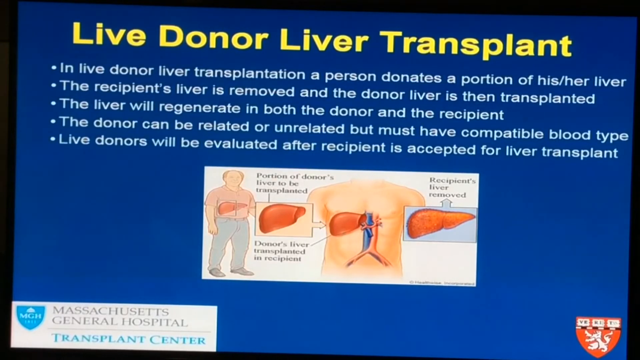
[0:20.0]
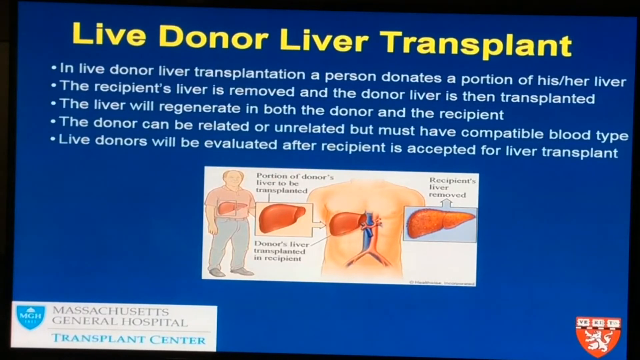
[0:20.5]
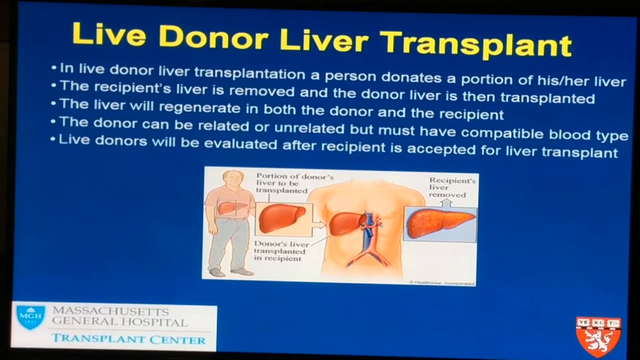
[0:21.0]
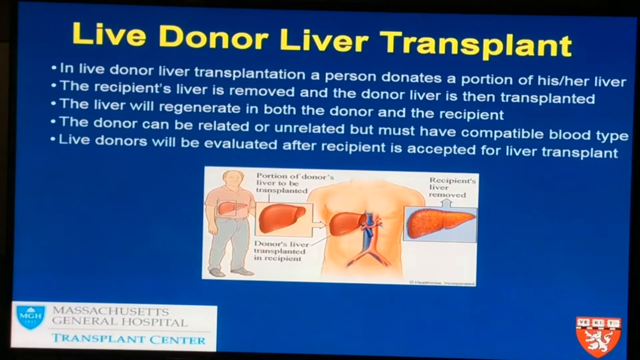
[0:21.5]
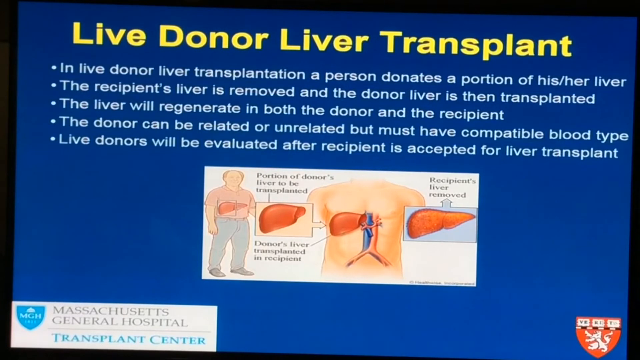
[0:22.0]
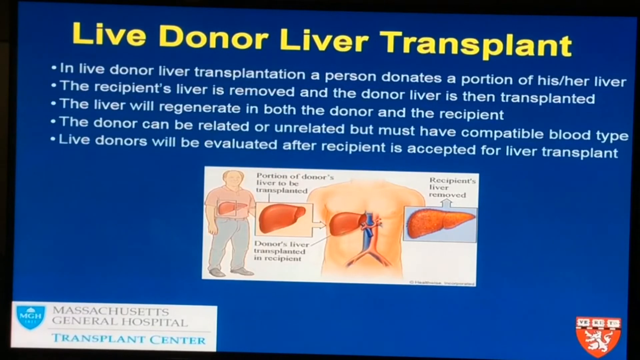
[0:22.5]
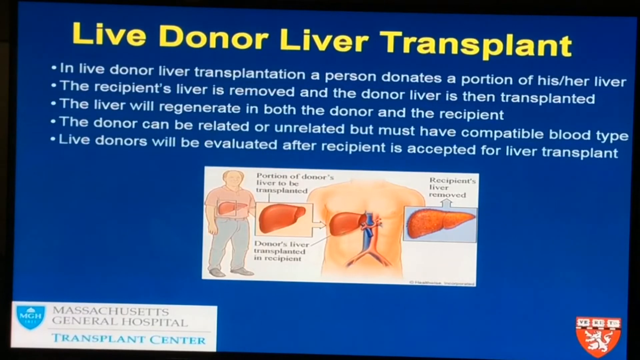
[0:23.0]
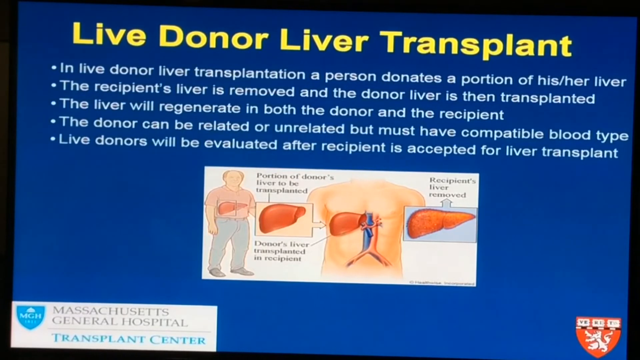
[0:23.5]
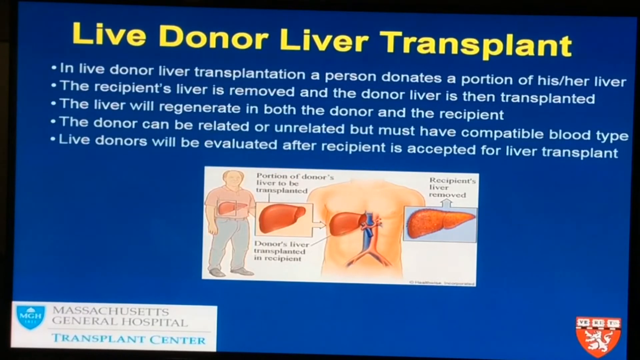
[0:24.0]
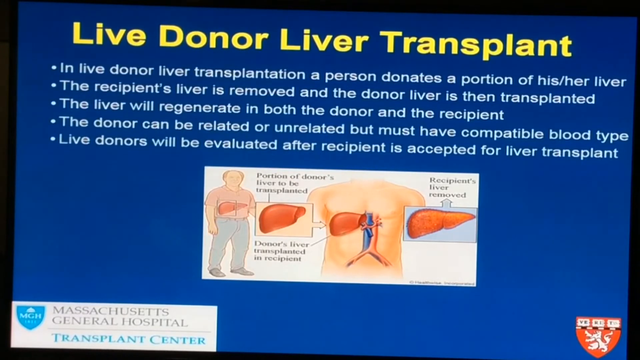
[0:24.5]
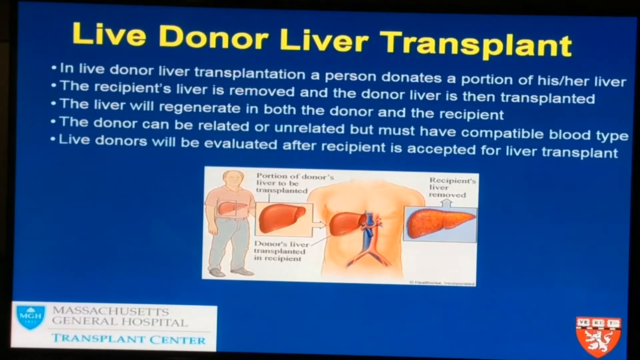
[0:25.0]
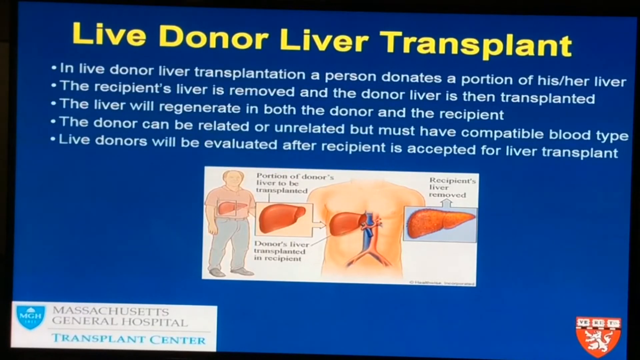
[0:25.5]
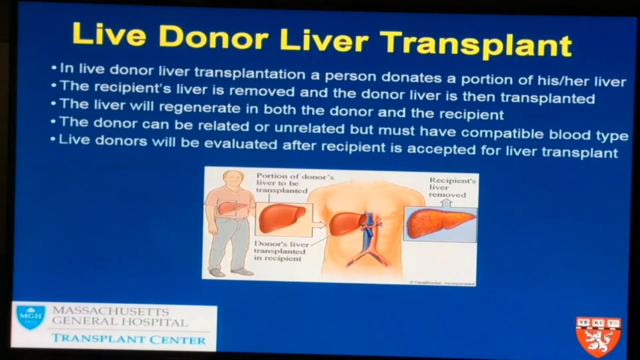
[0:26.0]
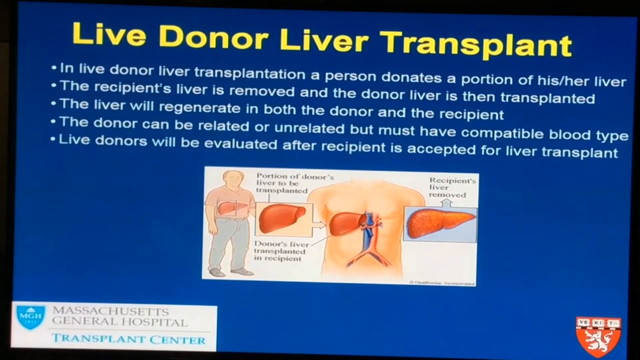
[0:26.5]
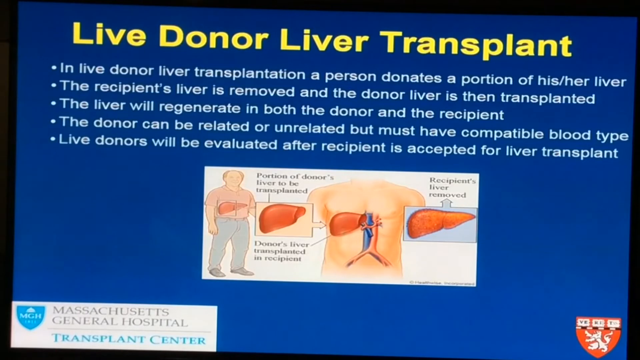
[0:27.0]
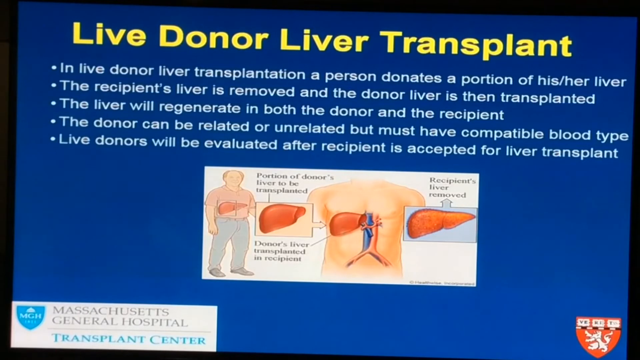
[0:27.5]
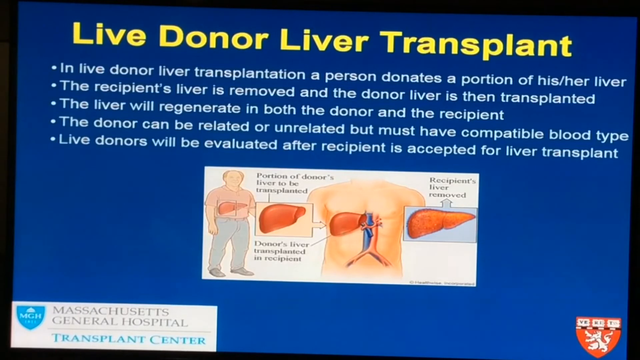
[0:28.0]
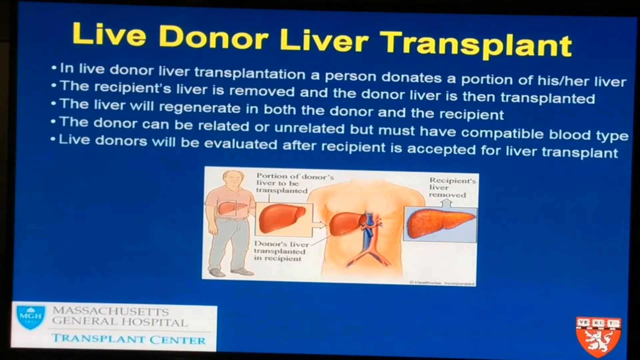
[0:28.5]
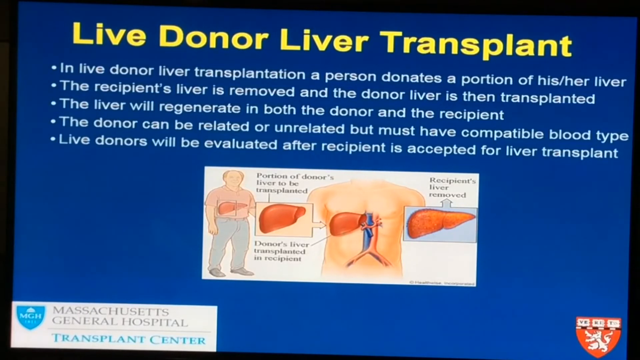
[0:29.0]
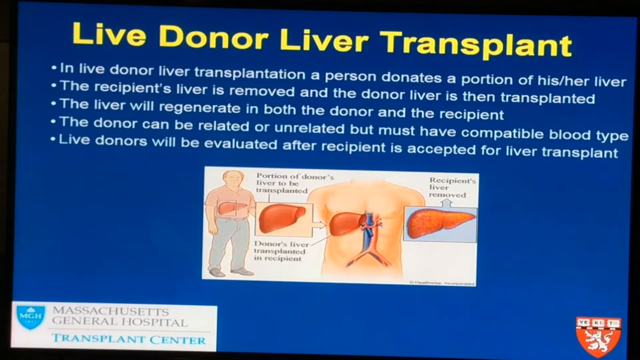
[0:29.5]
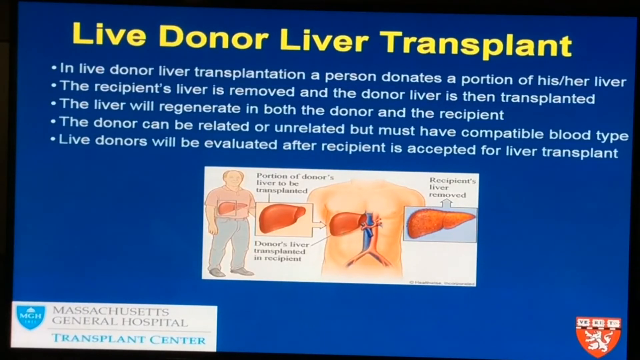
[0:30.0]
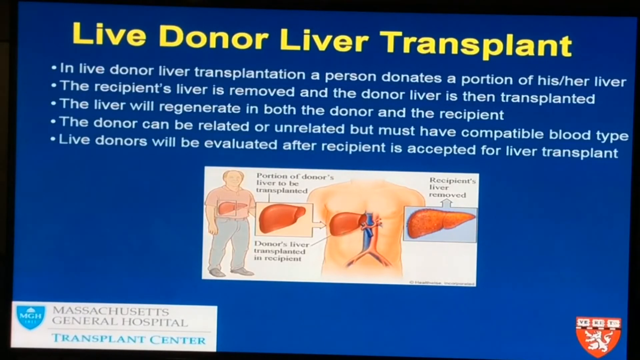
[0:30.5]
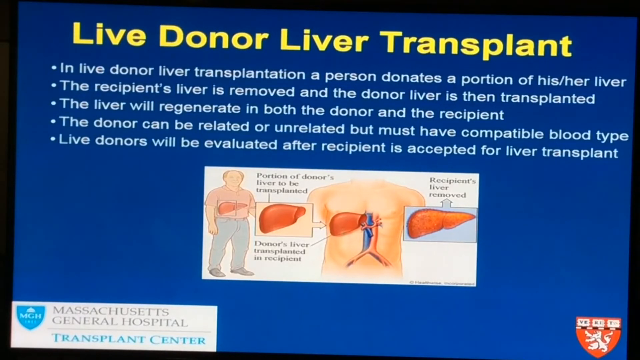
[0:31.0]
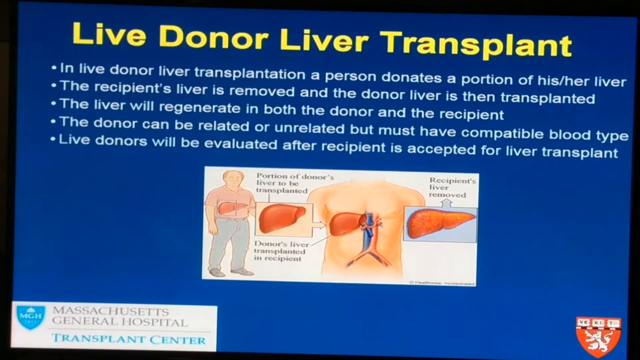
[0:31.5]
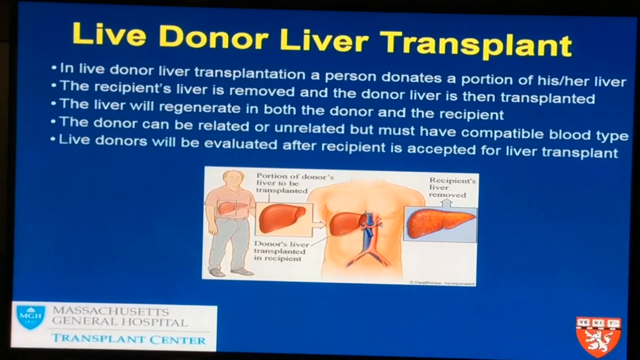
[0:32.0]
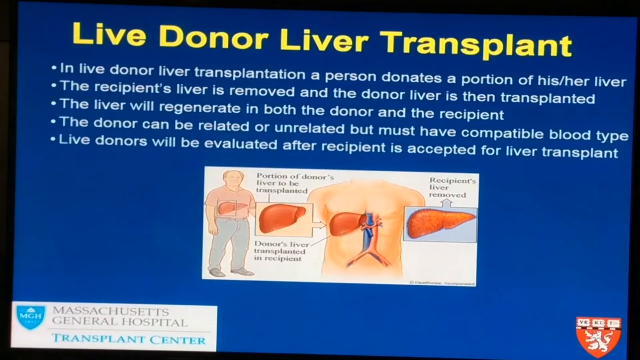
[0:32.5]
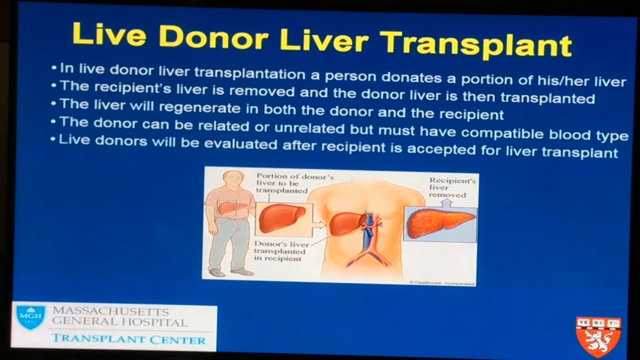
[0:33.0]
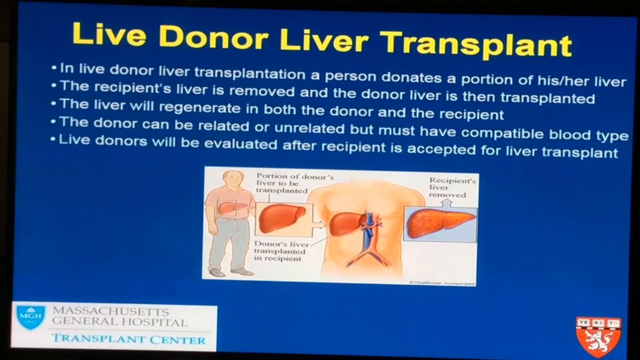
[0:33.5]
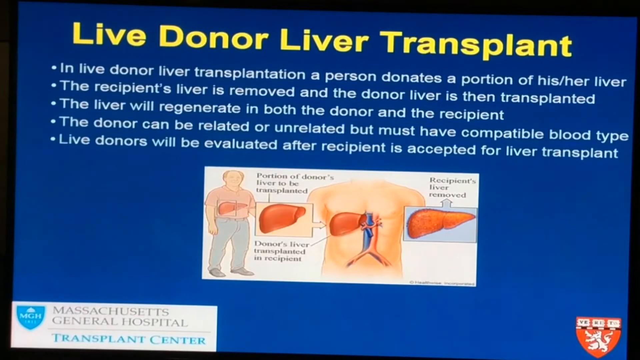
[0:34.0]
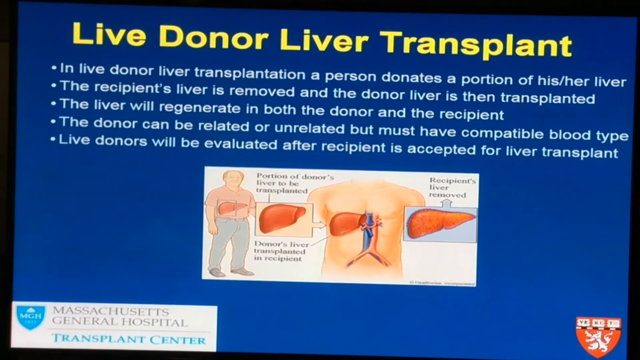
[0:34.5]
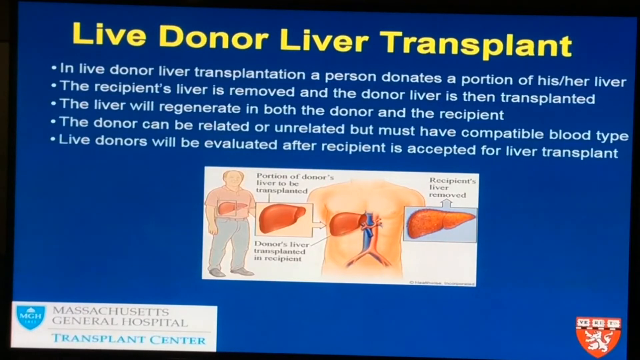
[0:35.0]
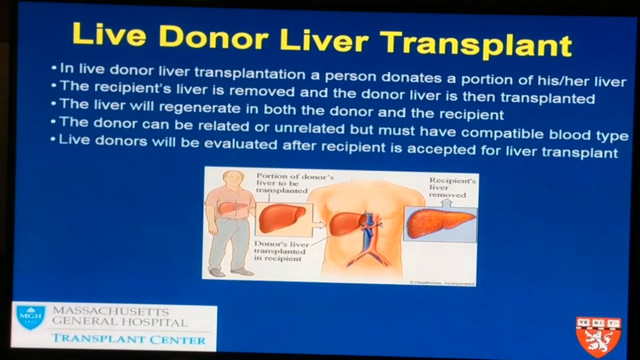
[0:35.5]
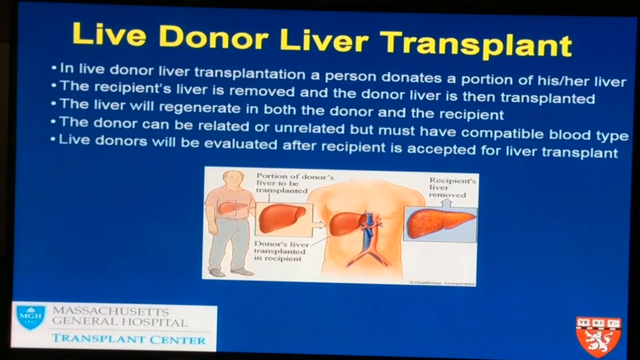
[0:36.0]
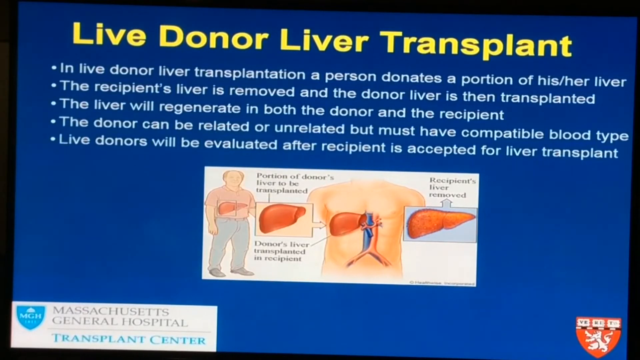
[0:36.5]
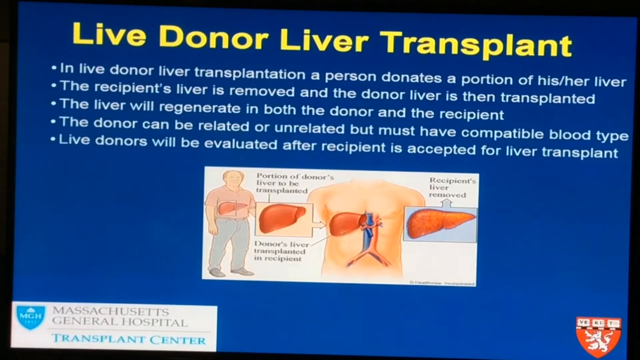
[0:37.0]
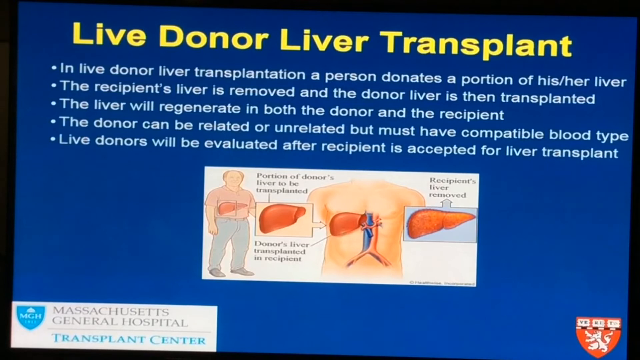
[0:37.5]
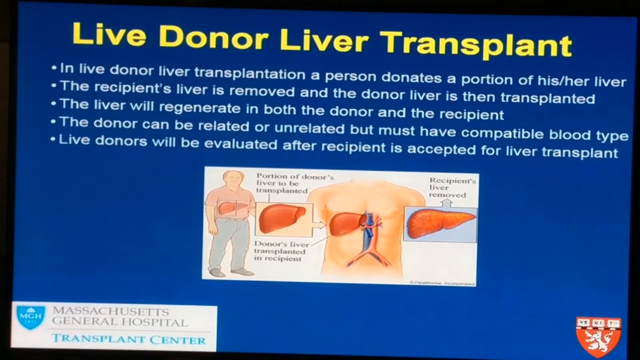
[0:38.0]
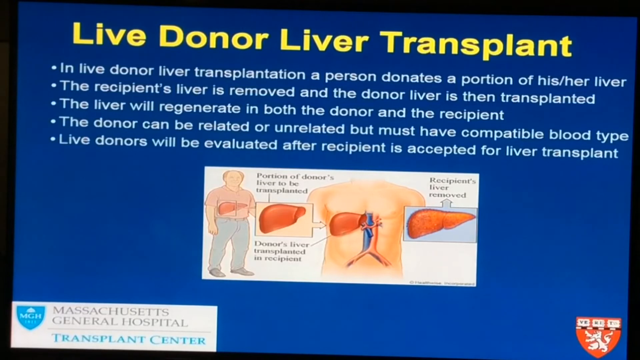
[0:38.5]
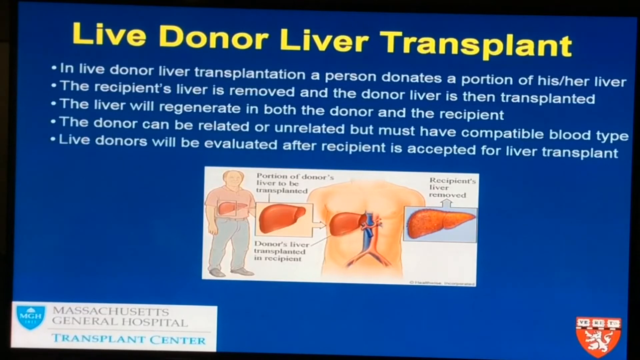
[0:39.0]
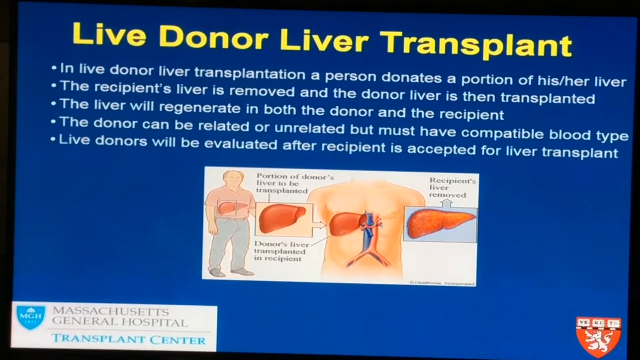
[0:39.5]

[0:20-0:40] A blue screen shows "live donor liver transplant" in yellow letters at the top. Below, five white dots run down the screen, each with a sentence next to it: "in live donor liver transplantation a person donates a portion of his or her liver"; "the recipient's liver is removed and the donor liver is then transplanted"; "the liver will regenerate in both the donor and the recipient"; "the donor can be related or unrelated but must have compatible blood type"; and "live donors will be evaluated after recipient is accepted for liver transplant". Below that is a depiction of a shirtless chest with blood veins, one blue and one red, with a liver to the left of the blue vein. There is a liver to the left of the chest and another to the right of it. There is writing on the page that cannot be read. On the left side of this white banner is a man wearing a pink shirt and blue jeans, with his liver shown through his body.